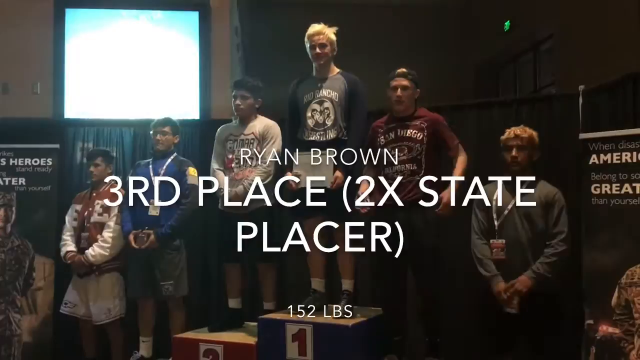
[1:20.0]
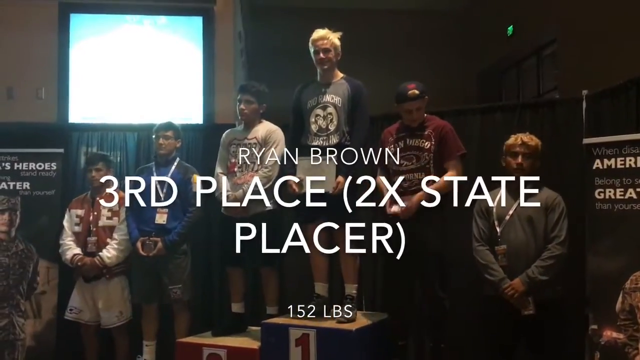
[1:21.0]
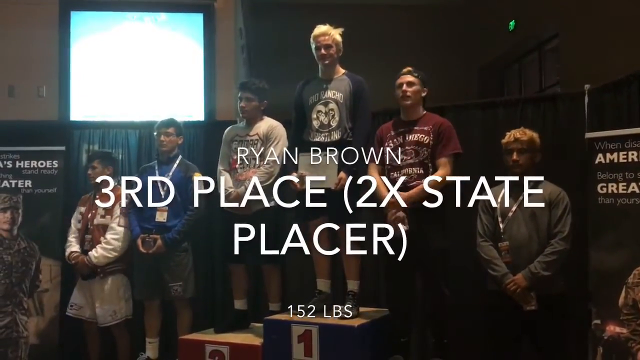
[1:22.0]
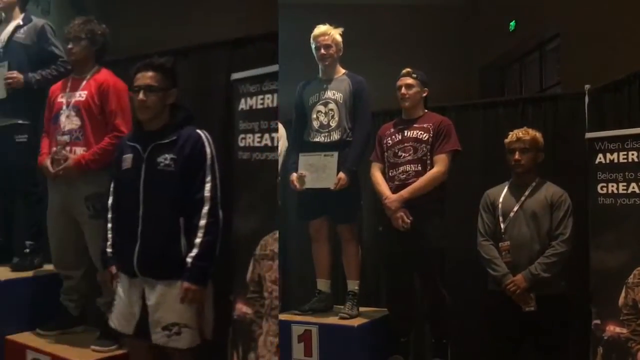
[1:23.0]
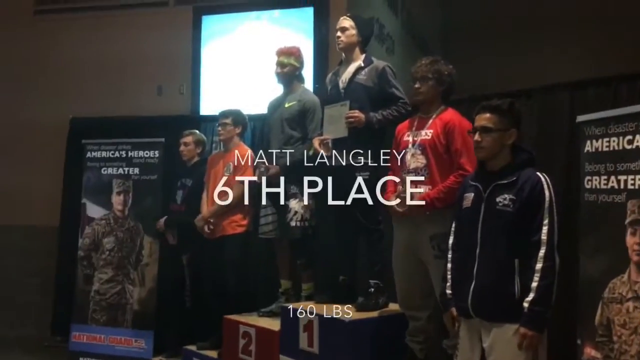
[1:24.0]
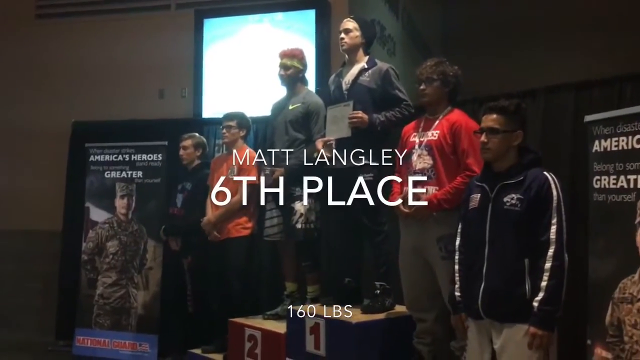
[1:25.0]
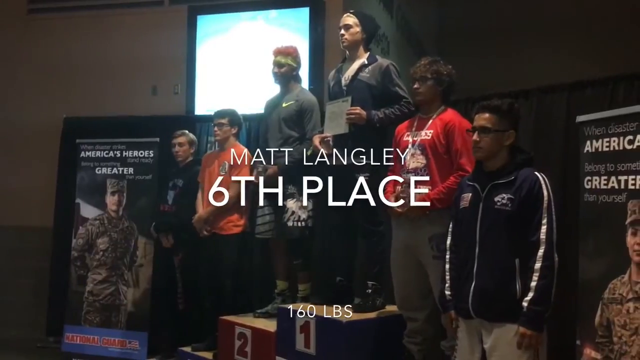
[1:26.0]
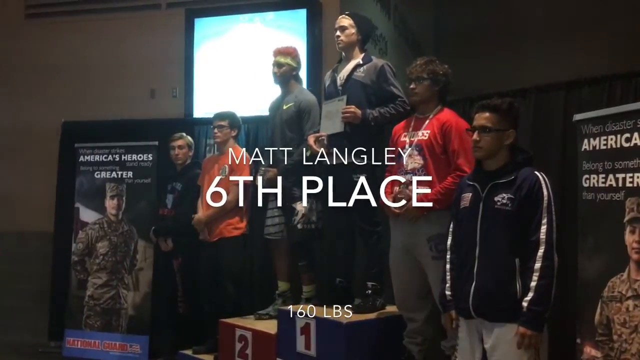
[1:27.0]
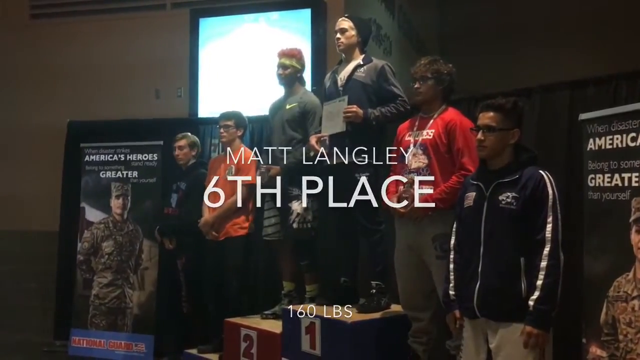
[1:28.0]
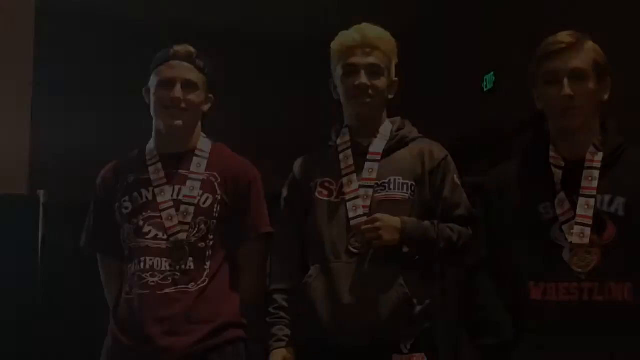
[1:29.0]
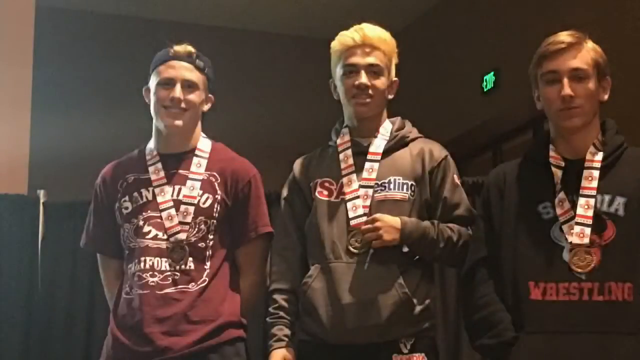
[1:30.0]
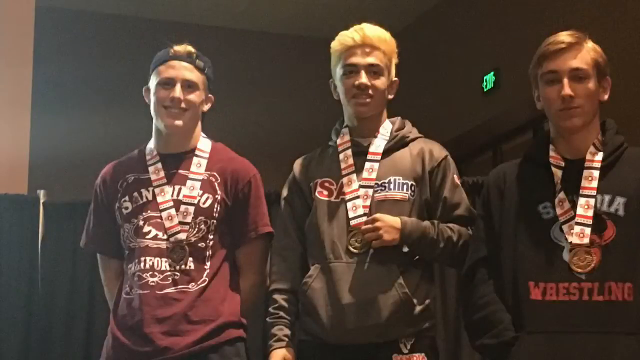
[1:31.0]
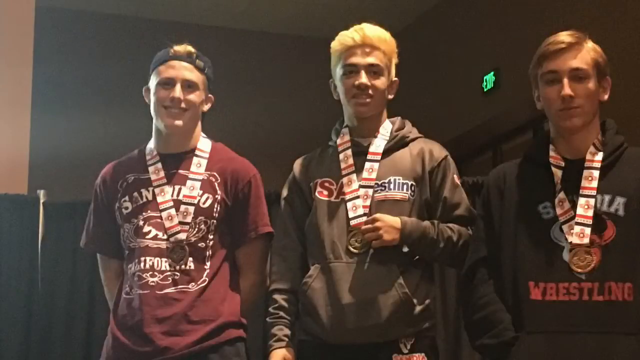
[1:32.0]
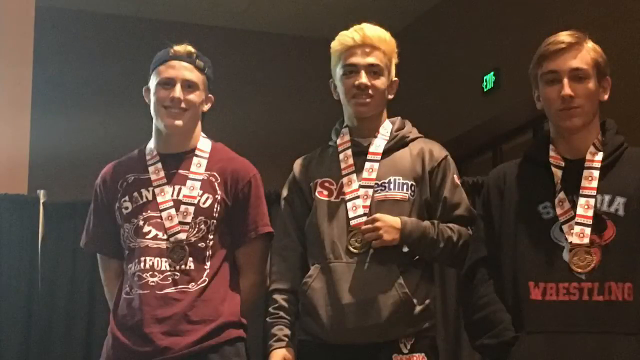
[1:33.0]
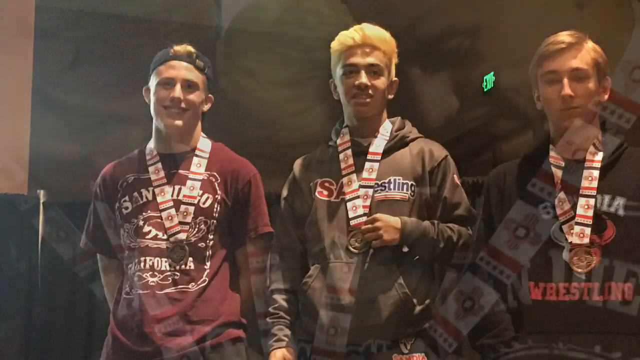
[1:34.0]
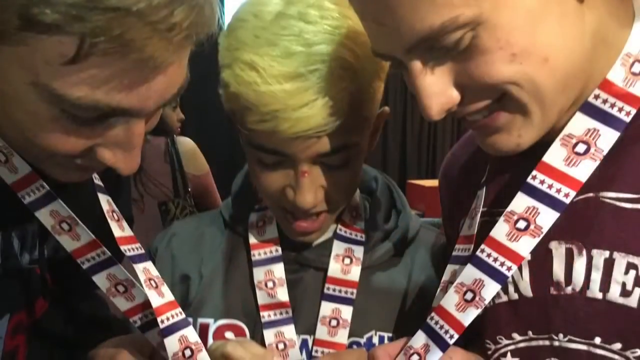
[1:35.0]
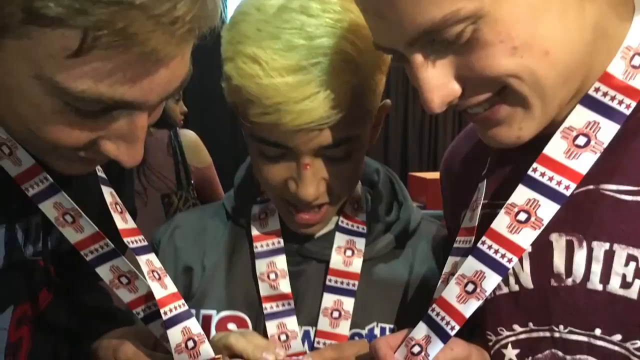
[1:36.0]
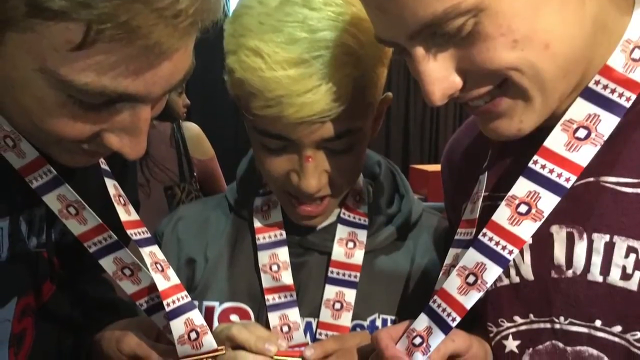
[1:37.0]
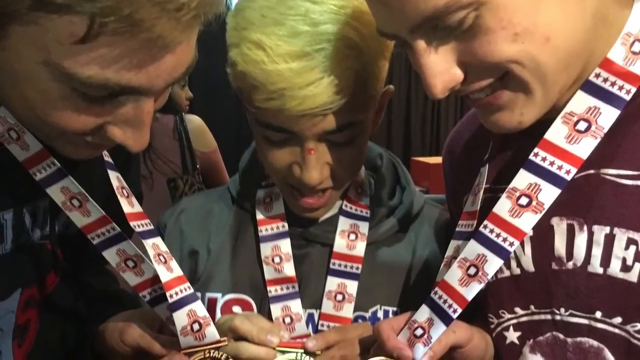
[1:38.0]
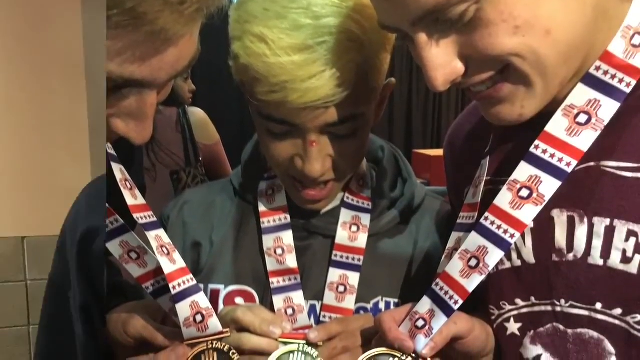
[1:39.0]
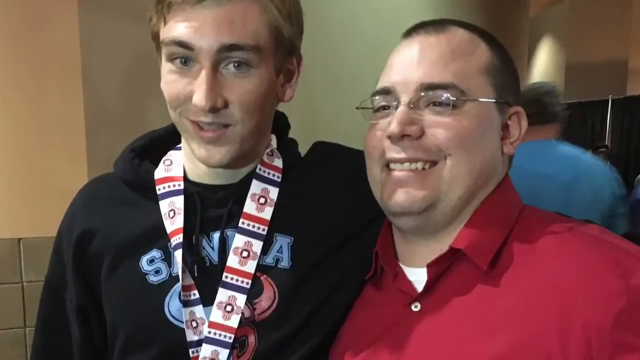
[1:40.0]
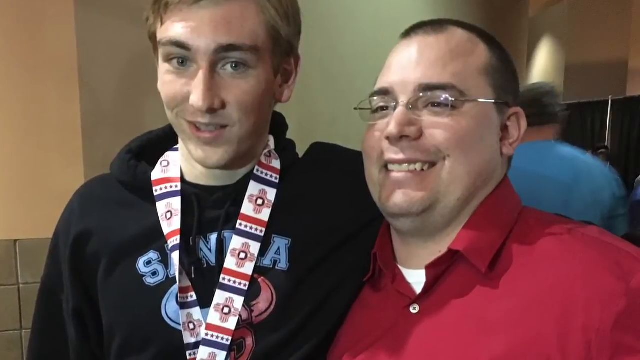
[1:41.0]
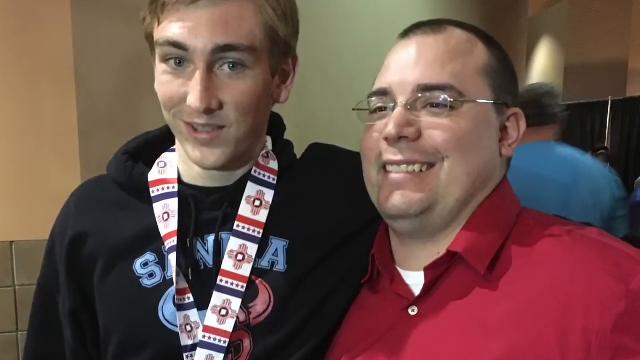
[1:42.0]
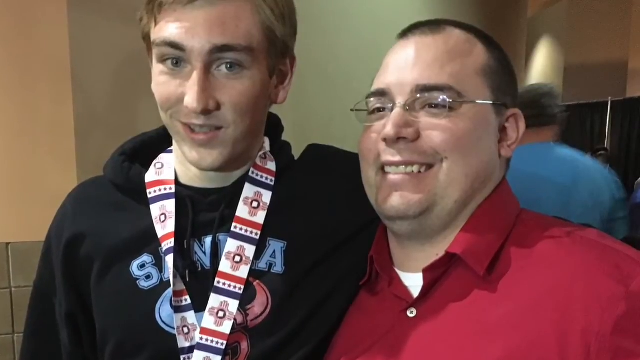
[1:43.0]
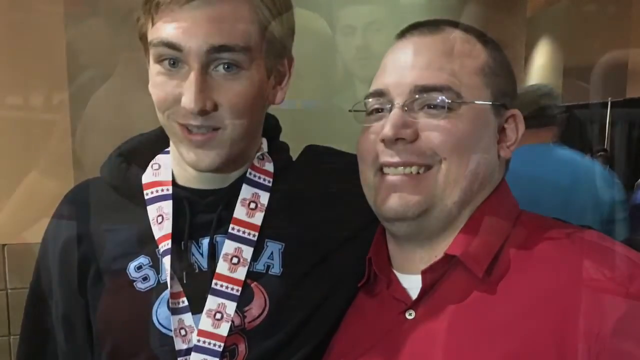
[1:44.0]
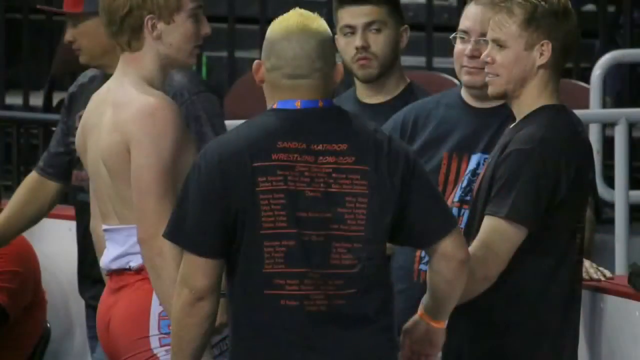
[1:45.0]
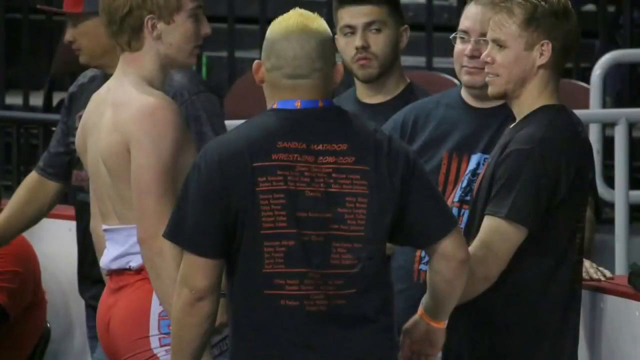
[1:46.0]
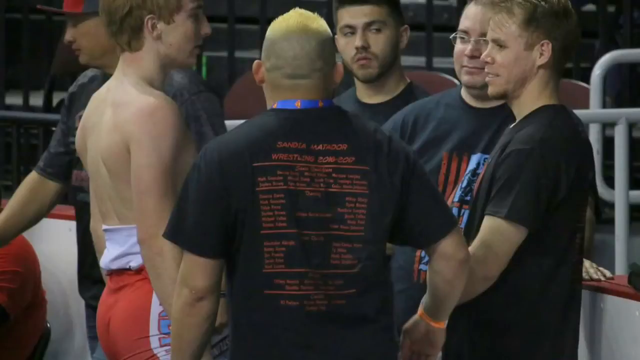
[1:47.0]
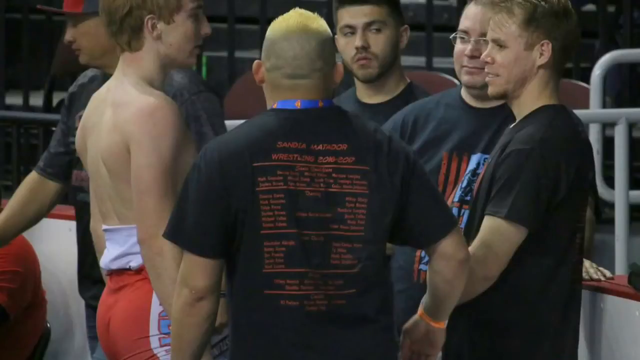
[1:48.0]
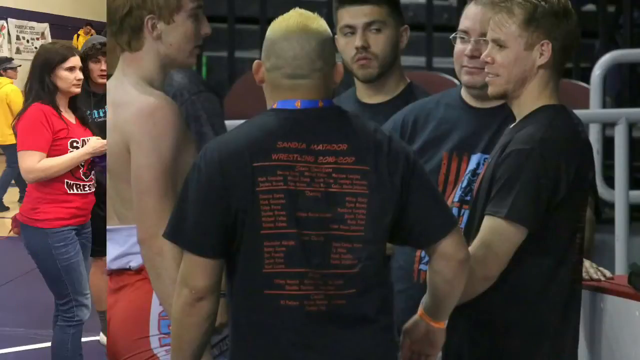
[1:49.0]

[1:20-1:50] People stand on the podium. Apparently Ryan Brown is the third-place finisher and a two-time state placer; he appears to be 152 pounds and stands in the number one spot on the podium. Matt Langley is in sixth place at 160 pounds. The video transitions through other still shots of the wrestlers standing on the podium, and the final shot shows them comparing the medals they wear around their necks. It then transitions to wrestlers standing around on the gymnasium floor talking to each other, probably congratulating each other.